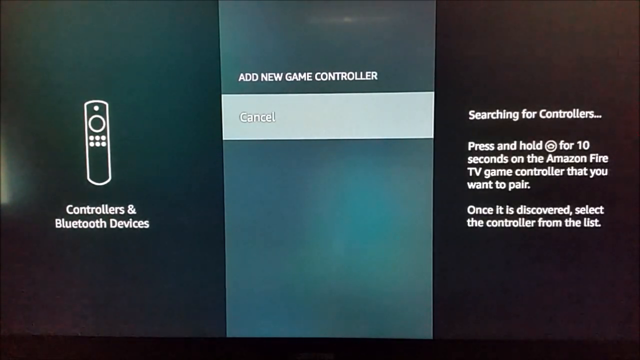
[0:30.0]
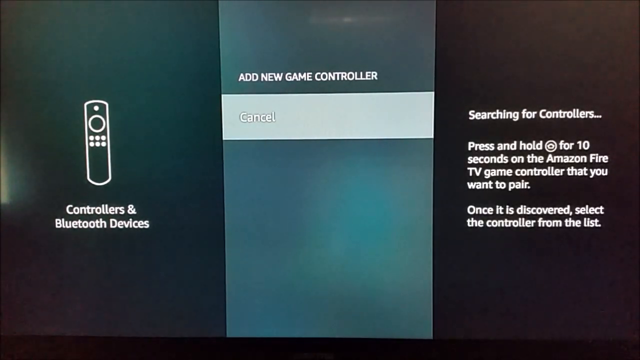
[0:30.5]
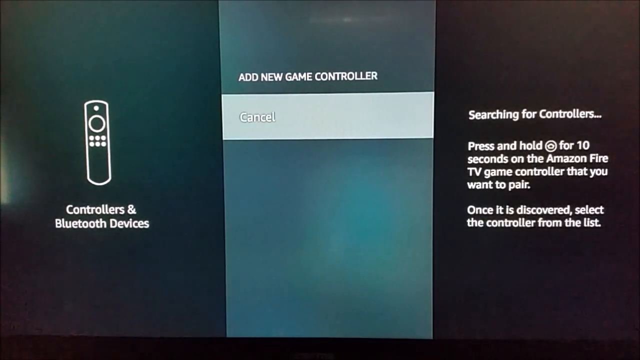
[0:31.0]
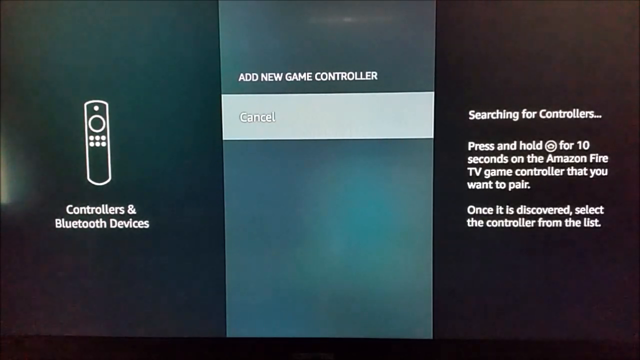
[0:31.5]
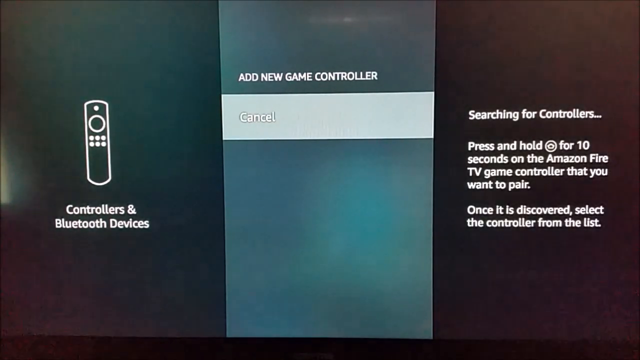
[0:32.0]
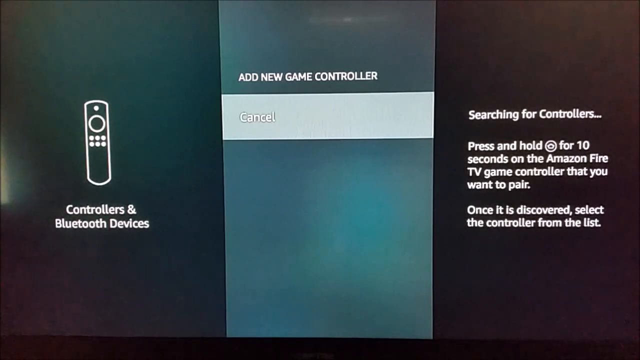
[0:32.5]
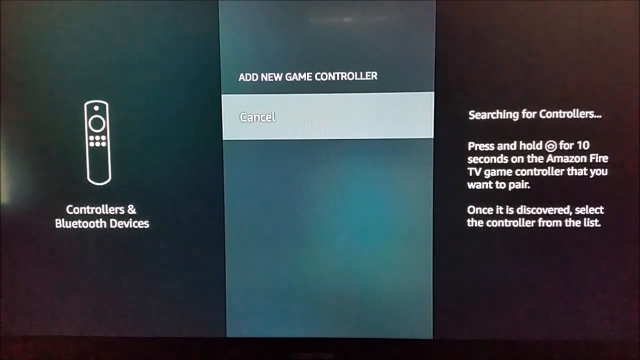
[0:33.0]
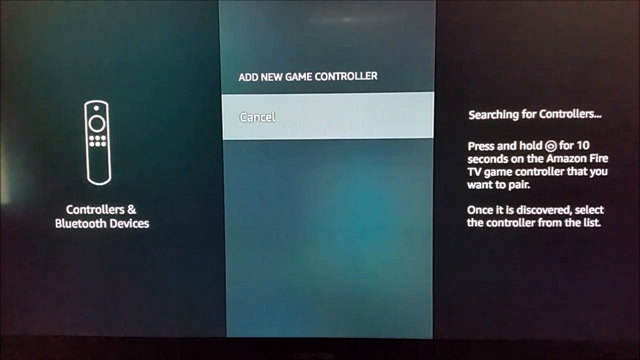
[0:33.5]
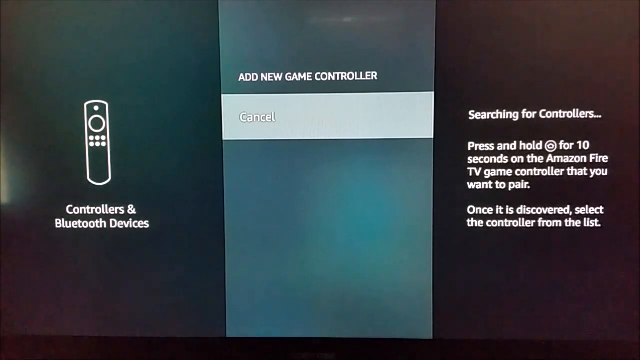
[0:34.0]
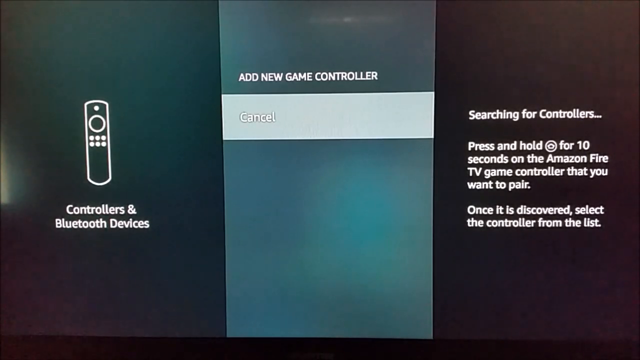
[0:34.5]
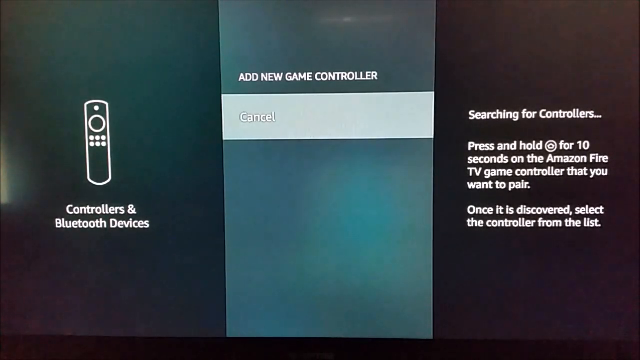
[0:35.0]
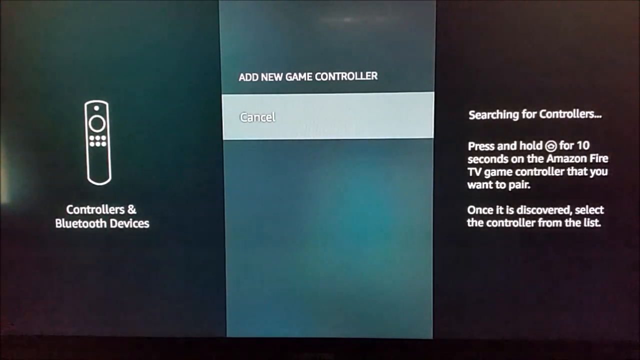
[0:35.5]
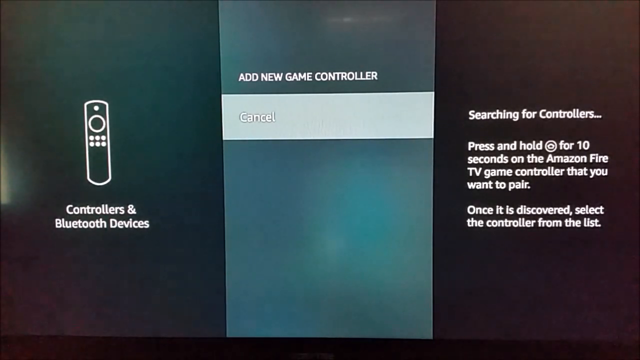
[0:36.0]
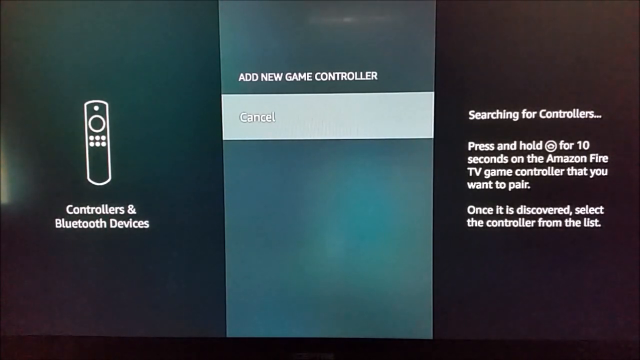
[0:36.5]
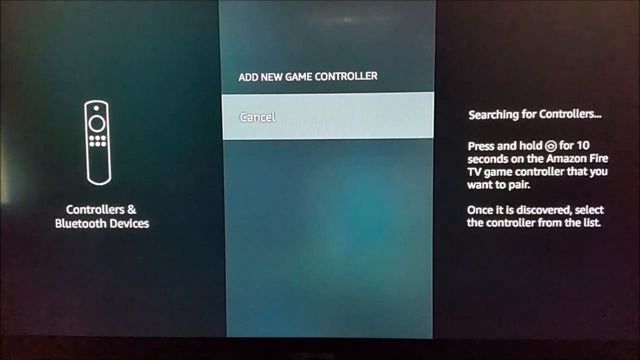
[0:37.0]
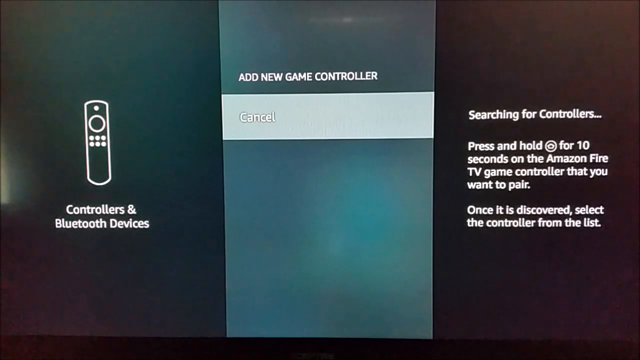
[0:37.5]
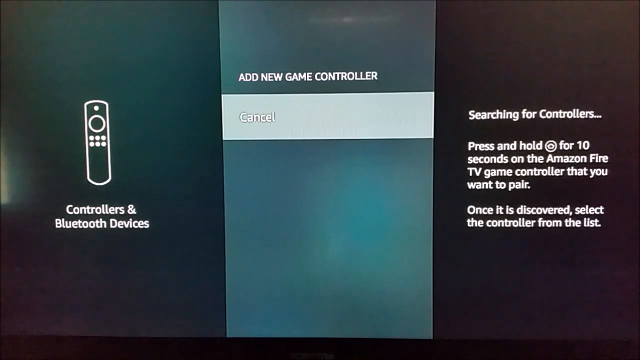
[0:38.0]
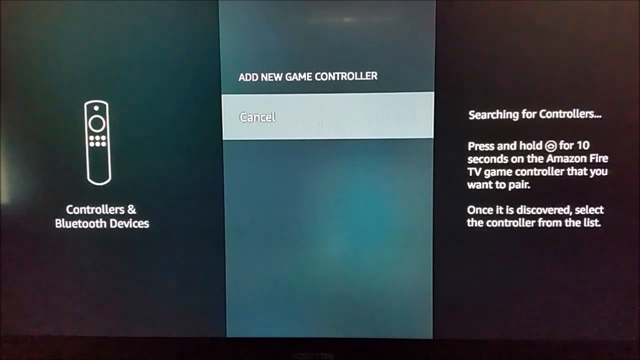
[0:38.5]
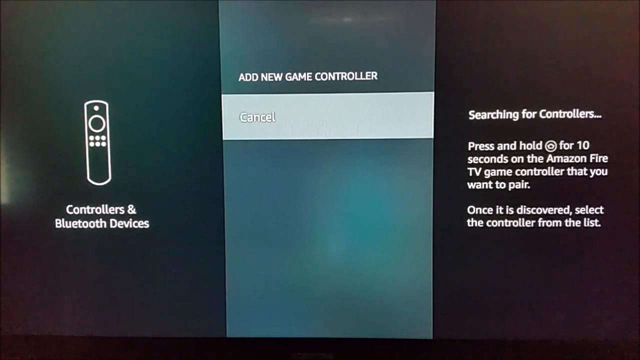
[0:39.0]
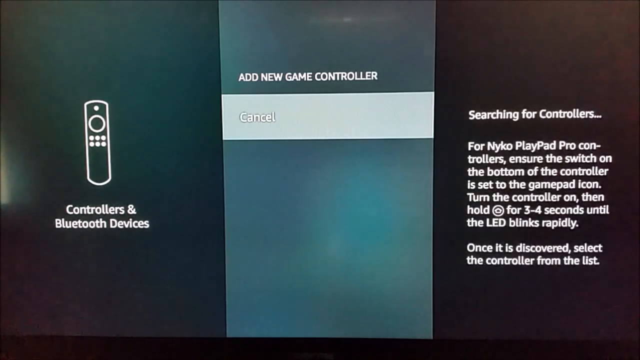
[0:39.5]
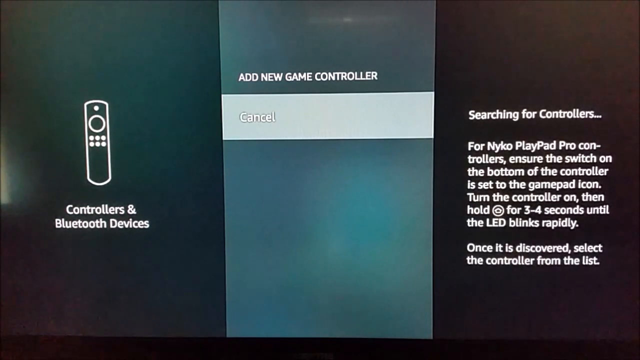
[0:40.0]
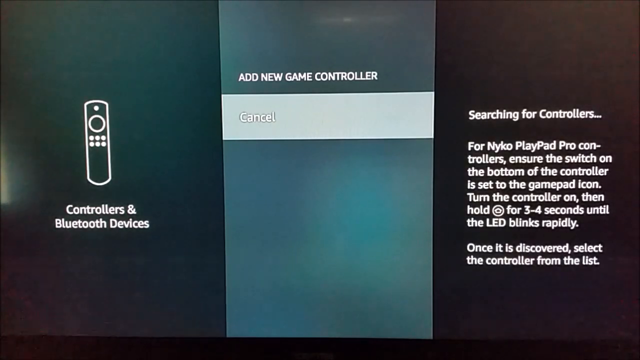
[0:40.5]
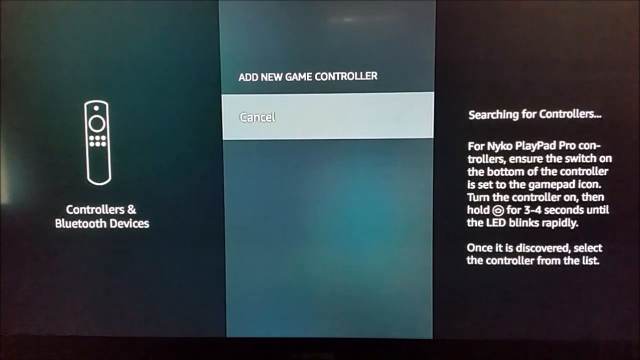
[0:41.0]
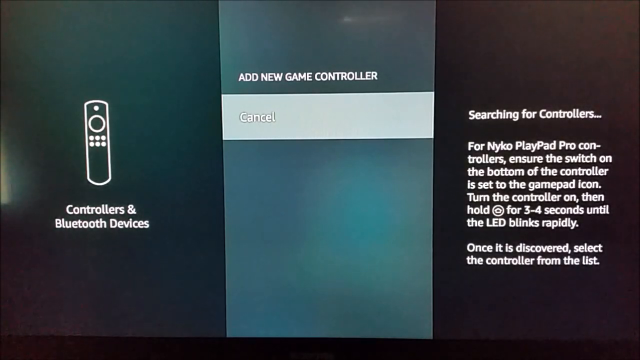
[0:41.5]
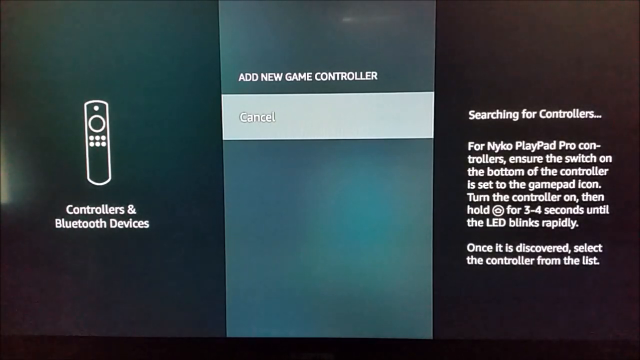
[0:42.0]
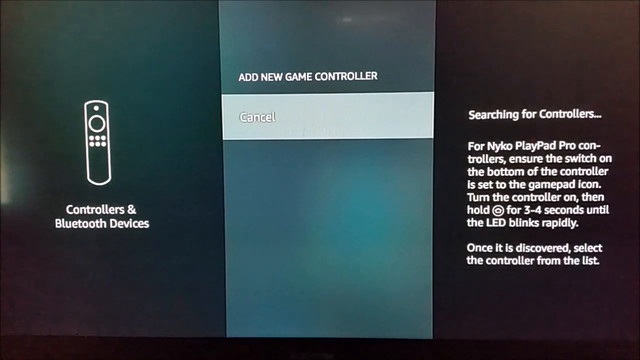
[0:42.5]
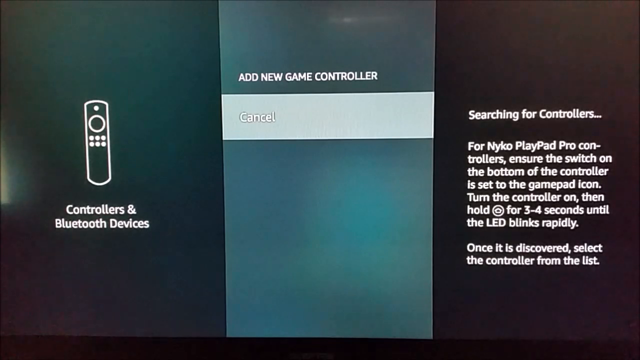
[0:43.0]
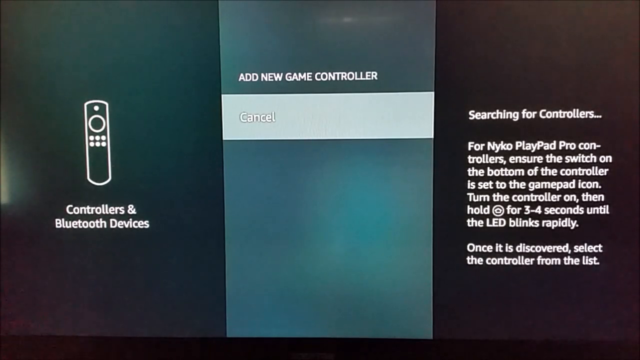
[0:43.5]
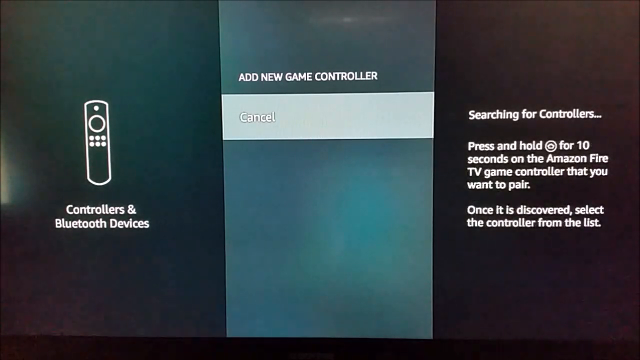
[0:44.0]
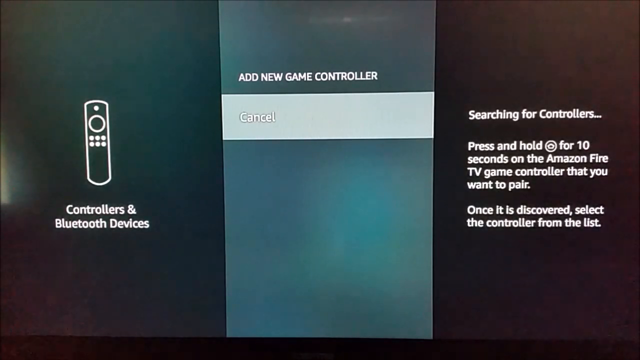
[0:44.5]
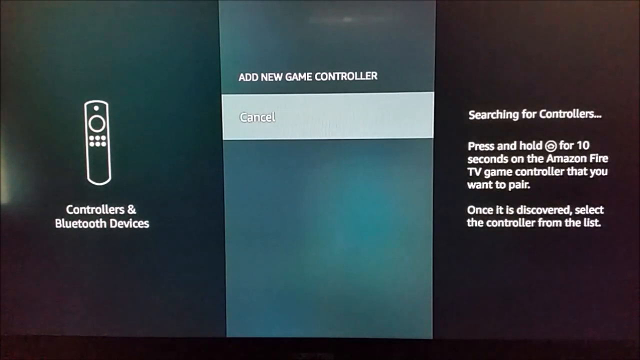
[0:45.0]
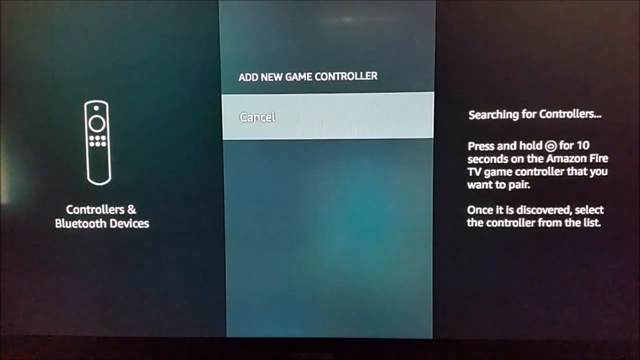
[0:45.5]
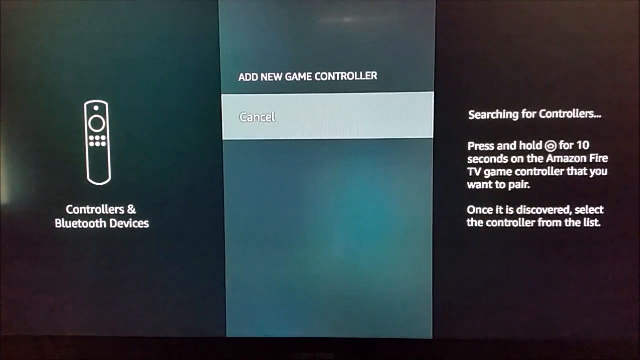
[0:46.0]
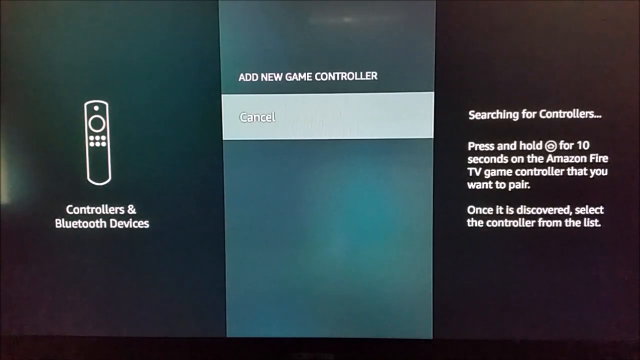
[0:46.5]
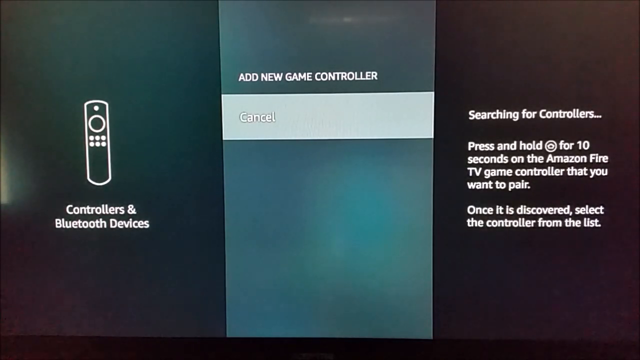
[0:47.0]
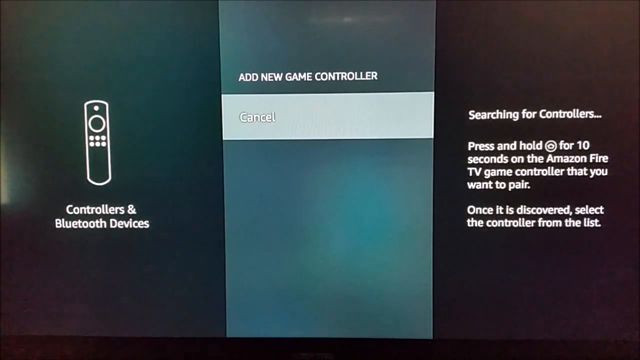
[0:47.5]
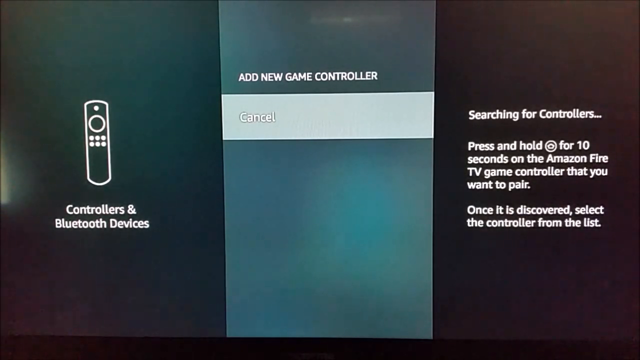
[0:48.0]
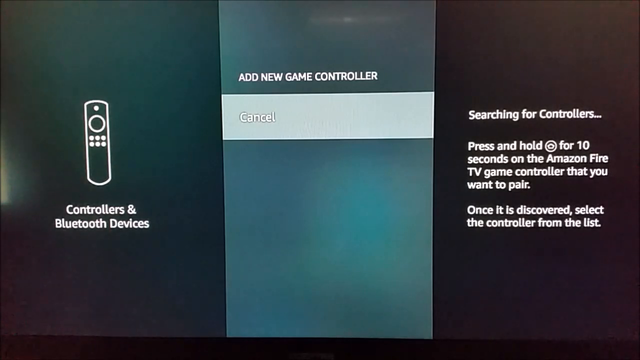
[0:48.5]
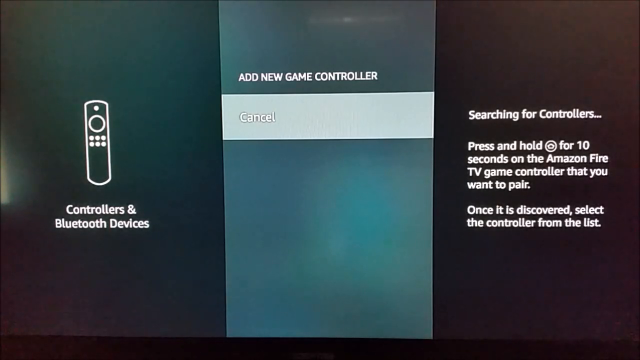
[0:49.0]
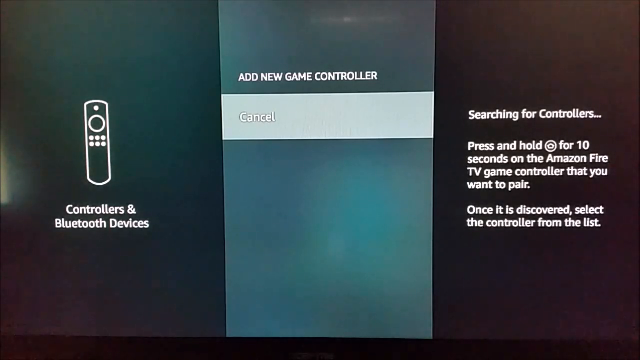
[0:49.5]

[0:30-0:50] The user goes to game controllers and chooses to add a new game controller. On the right, options read "select this option" and "search for new game controllers," followed by "searching for controllers." An instruction apparently says to press and hold a button "for 10 seconds on the amazon fire tv game controller that you want to pair," and text reads "once it is discovered select the controller from the list."